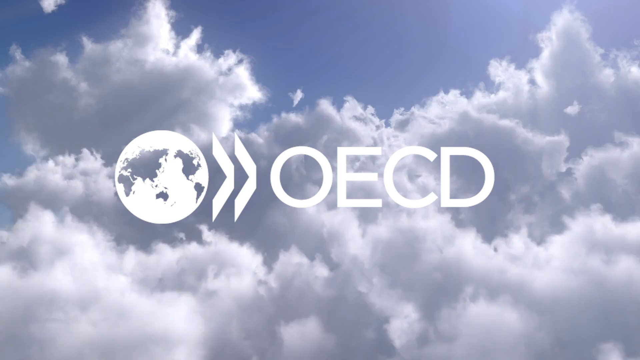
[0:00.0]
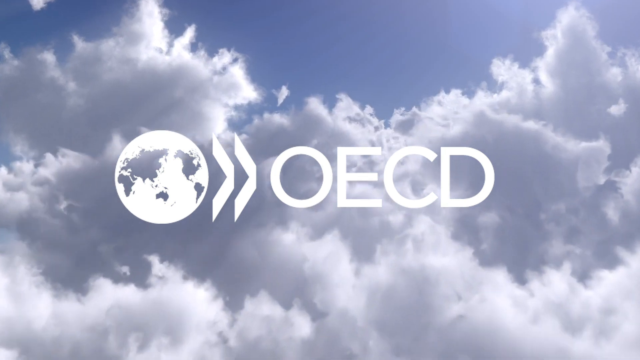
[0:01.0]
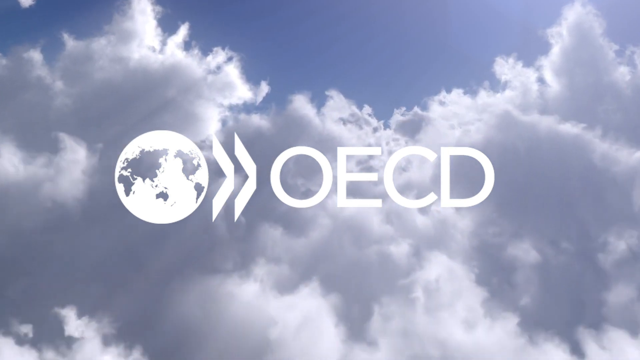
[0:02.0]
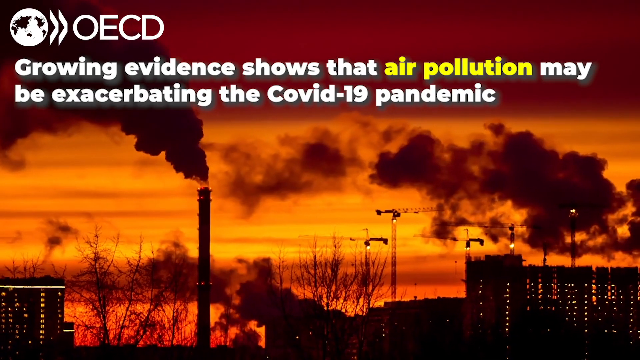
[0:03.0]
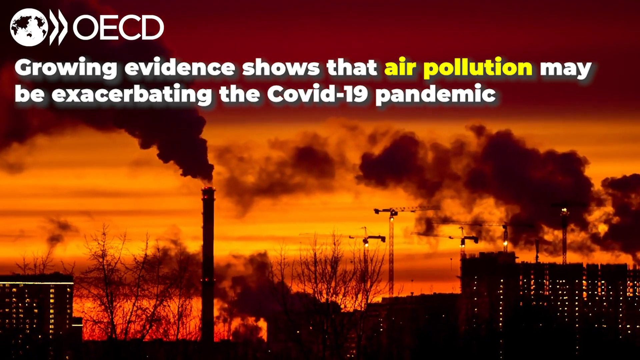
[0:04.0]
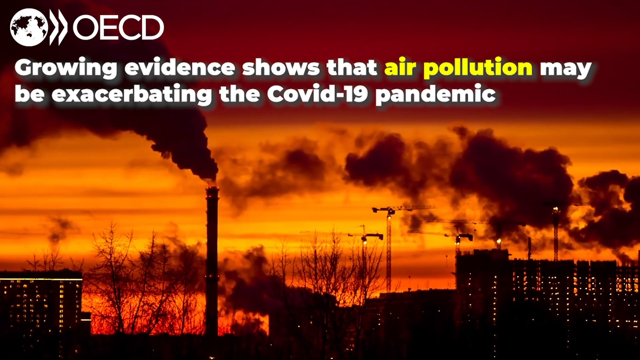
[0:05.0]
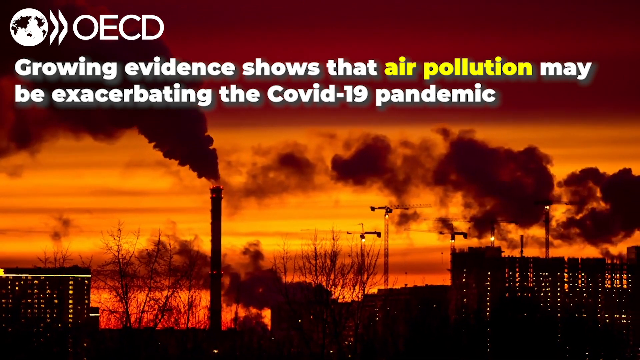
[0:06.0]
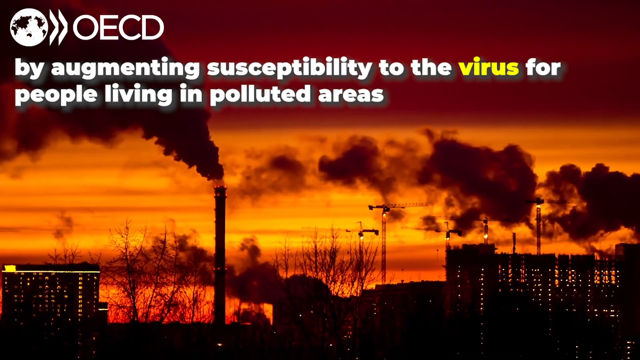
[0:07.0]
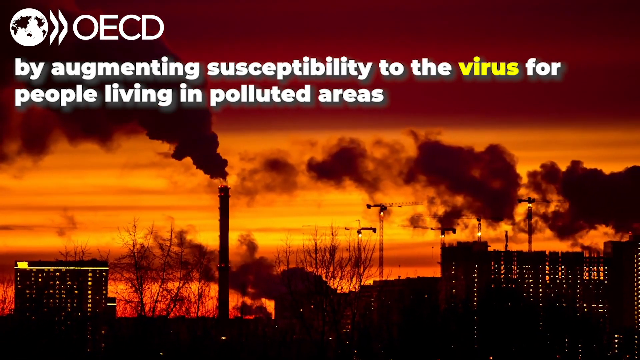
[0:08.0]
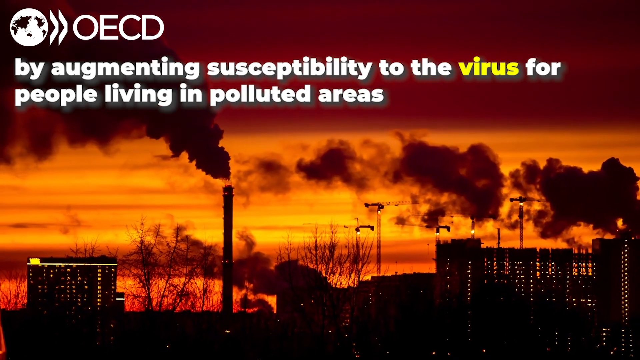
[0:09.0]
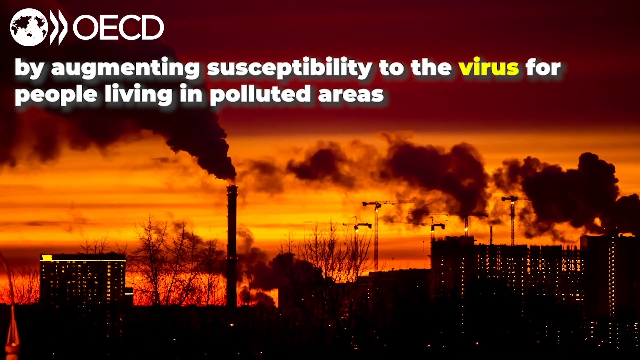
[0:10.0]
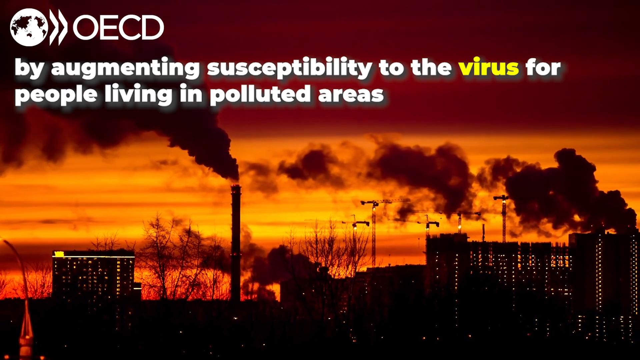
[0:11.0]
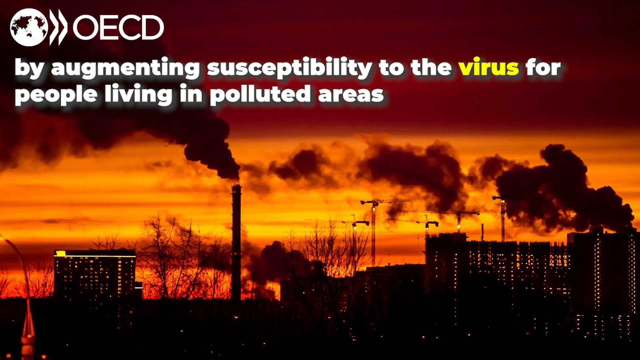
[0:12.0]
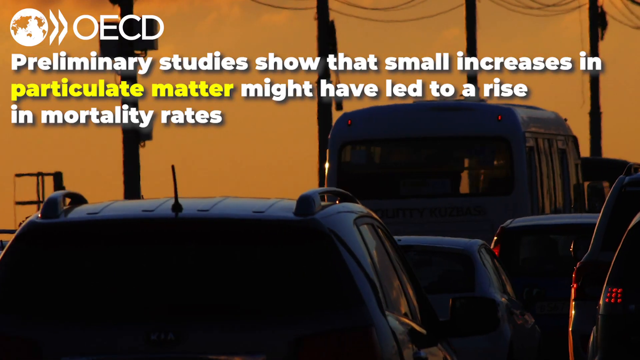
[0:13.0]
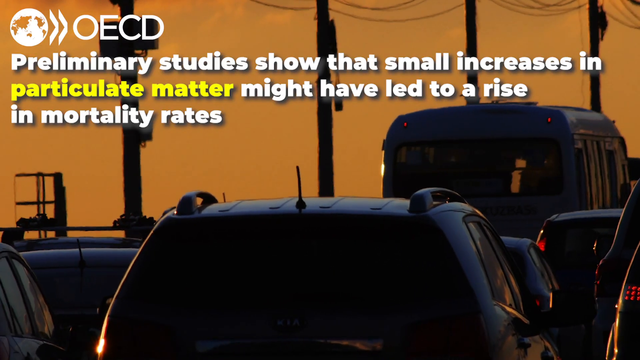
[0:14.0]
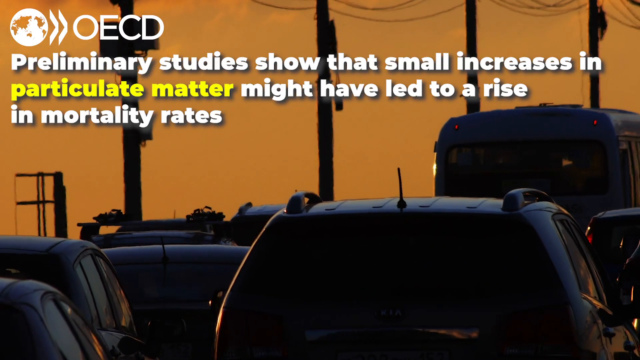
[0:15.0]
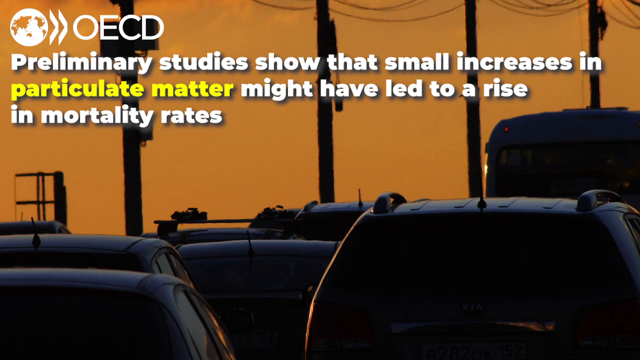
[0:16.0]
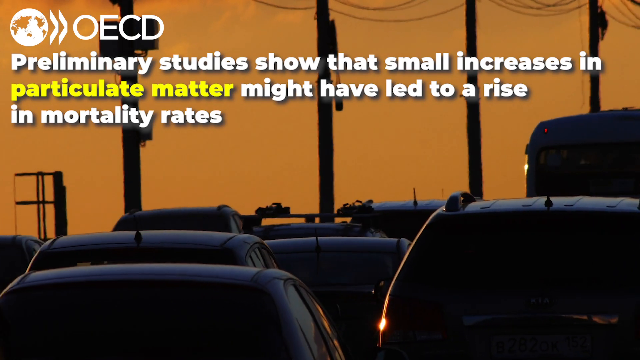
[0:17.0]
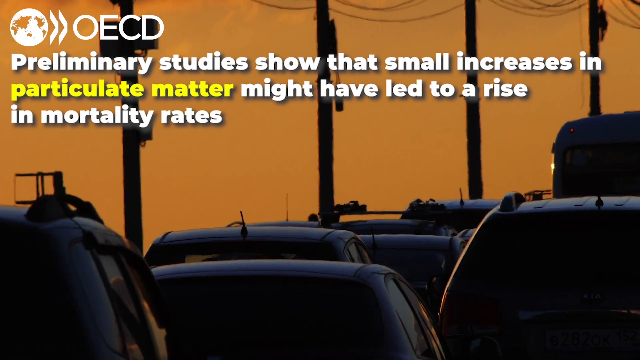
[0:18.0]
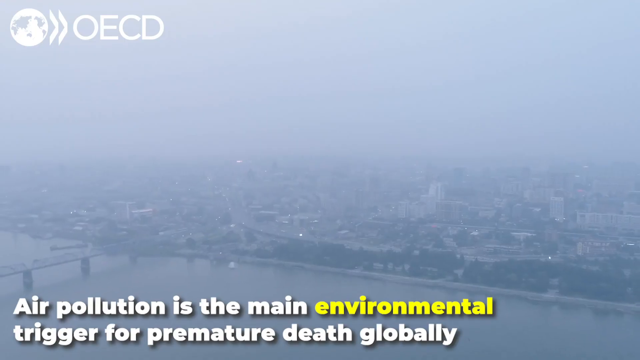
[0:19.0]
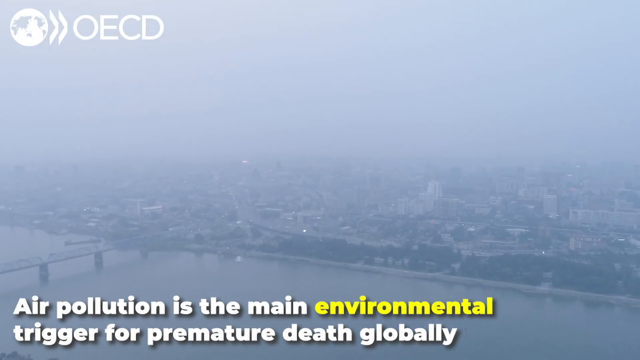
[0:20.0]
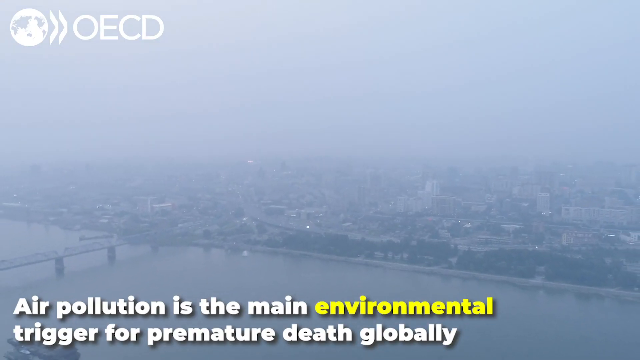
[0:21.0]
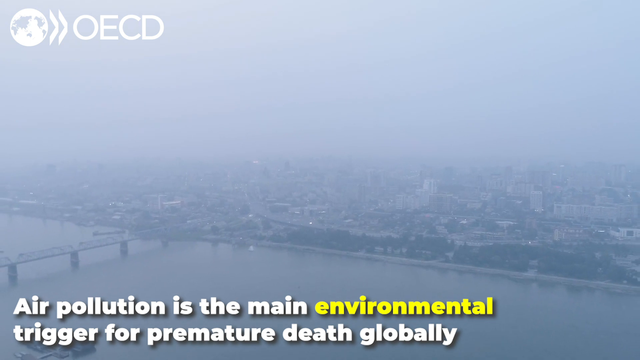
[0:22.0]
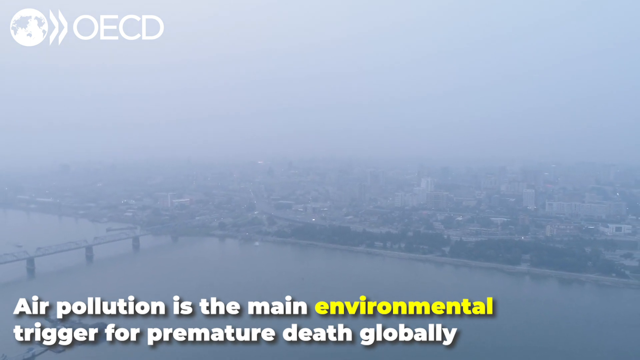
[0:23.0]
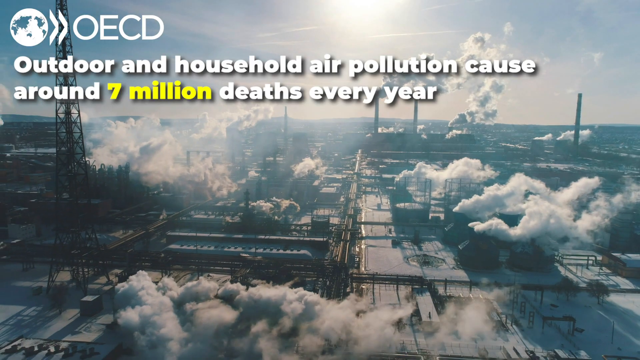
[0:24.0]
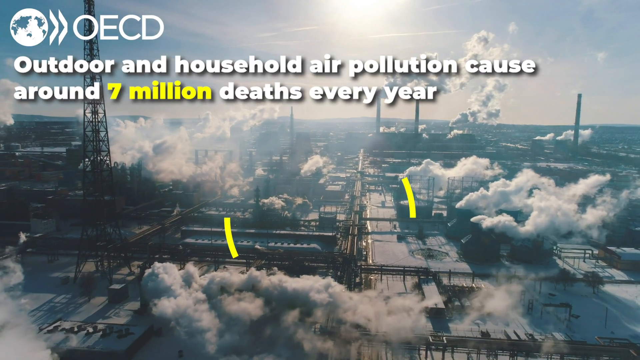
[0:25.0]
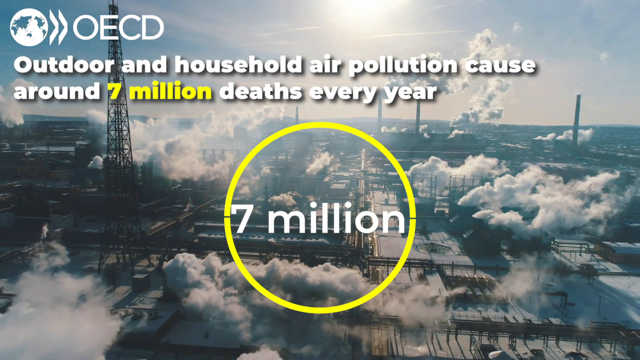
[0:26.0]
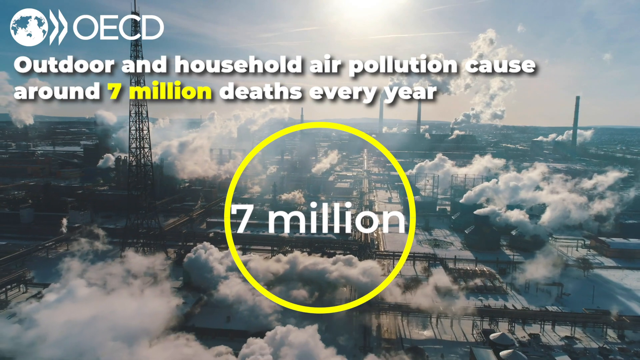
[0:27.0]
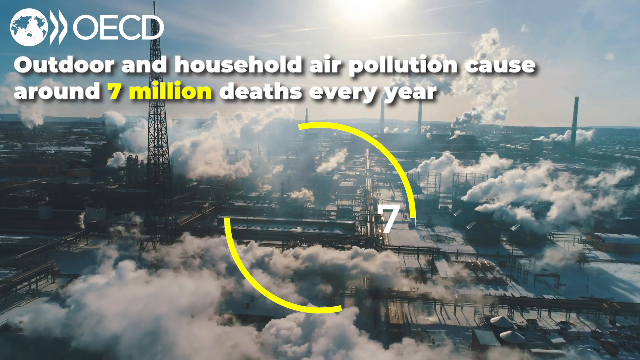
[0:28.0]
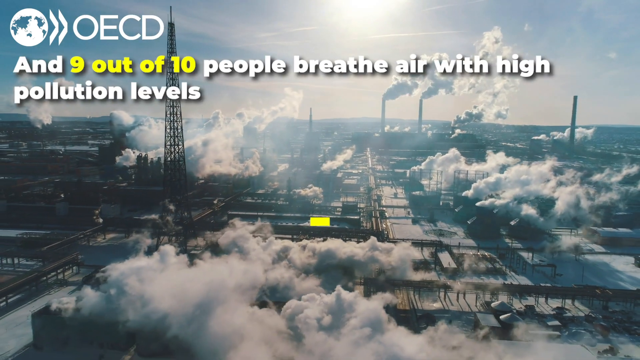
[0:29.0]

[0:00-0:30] The video opens on a blue sky with white fluffy clouds on a sunny day, the clouds moving towards the camera. In the middle of the screen are a white silhouette of the Earth, two white arrows facing to the right, and, in white capital letters, "OECD". The scene changes to a factory or industrial area with tall chimneys and black smoke pluming out of their tops. It looks like it was filmed at sunset: the sky has different orange hues, yellow at the horizon at the bottom of the screen and growing more orange and darker further up. The silhouettes of cranes and some trees can be made out. Text at the top reads "growing evidence shows that air pollution may be exasperating the COVID-19 pandemic", with "air pollution" in yellow. The camera slowly zooms out and more of the factories come into view, with lights on in the windows of the factories on the right and the left. Next come close-ups of the backs of cars; there are lots of cars, moving forward. Then an aerial view, as though from a helicopter, shows a city and a river in very heavy fog, the buildings below barely visible. Text at the bottom reads "air pollution is the main environmental trigger for premature death globally". Another view follows of a big industrial area, this time in daylight, with the sun at the top of the frame and white smoke billowing out of most of the factories. White lettering at the top reads "outdoor and household air pollution cause around 7 million deaths every year", with "7 million" in yellow, and in the middle of the screen "7 million" is written with a yellow circle drawn around it.